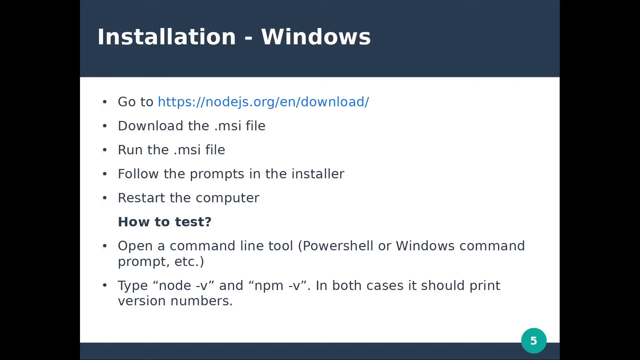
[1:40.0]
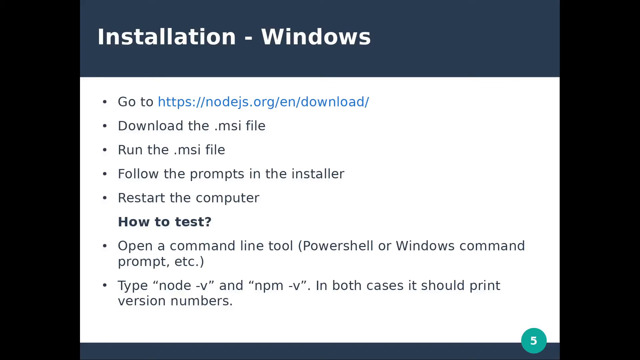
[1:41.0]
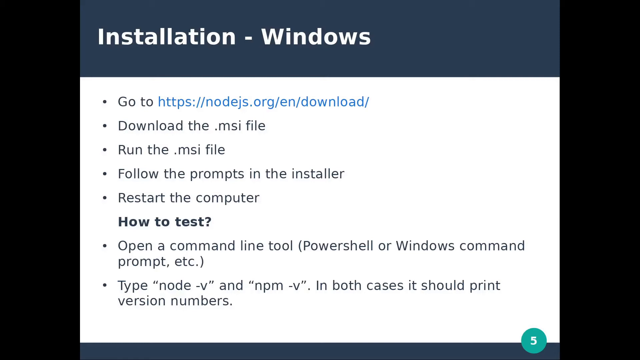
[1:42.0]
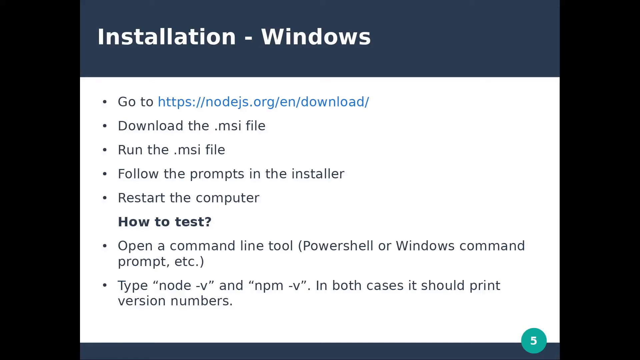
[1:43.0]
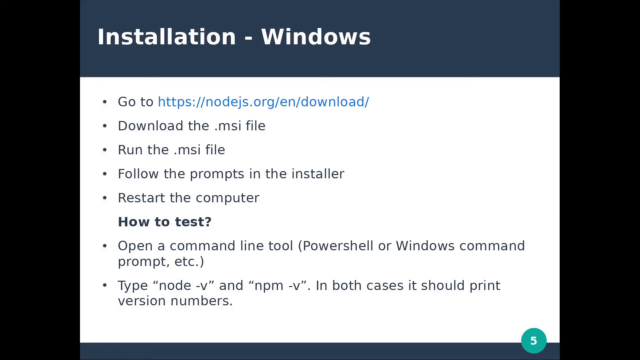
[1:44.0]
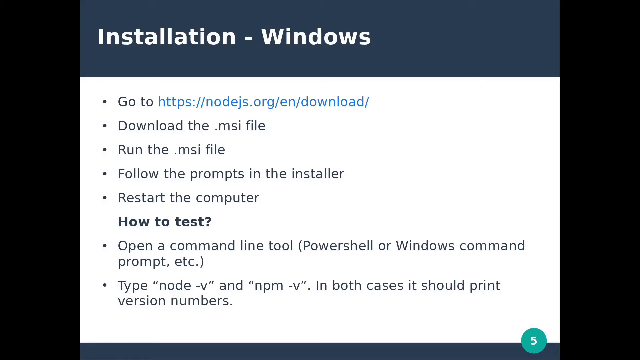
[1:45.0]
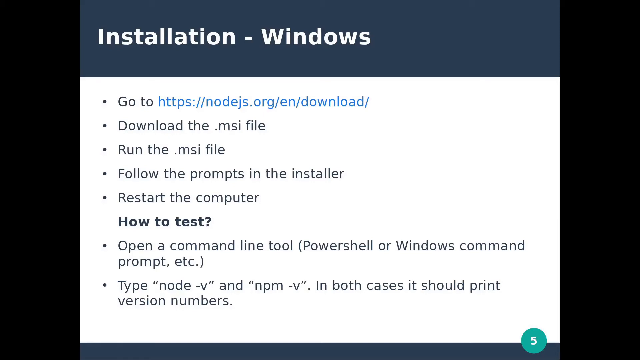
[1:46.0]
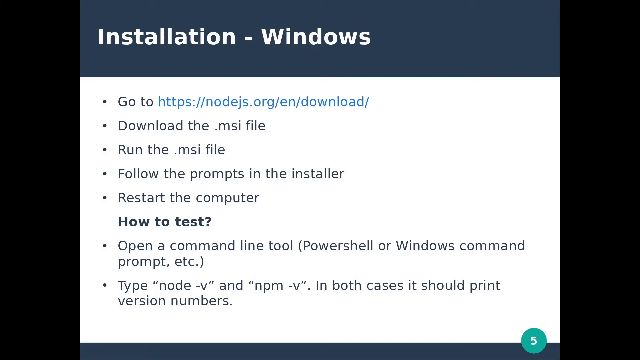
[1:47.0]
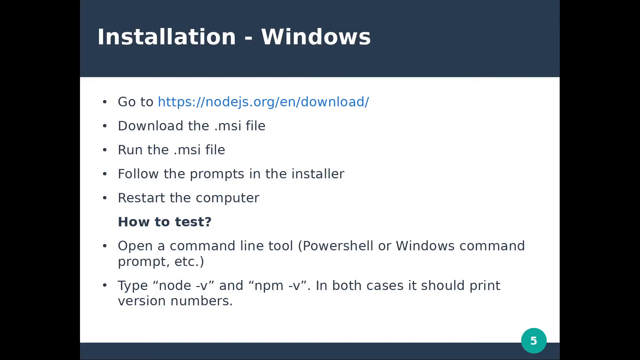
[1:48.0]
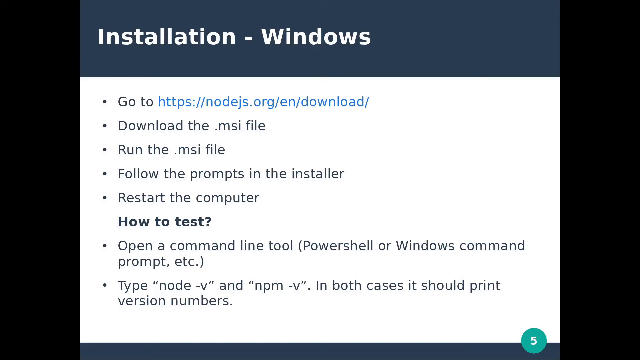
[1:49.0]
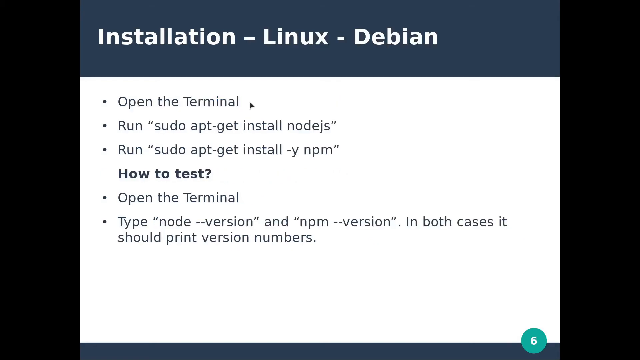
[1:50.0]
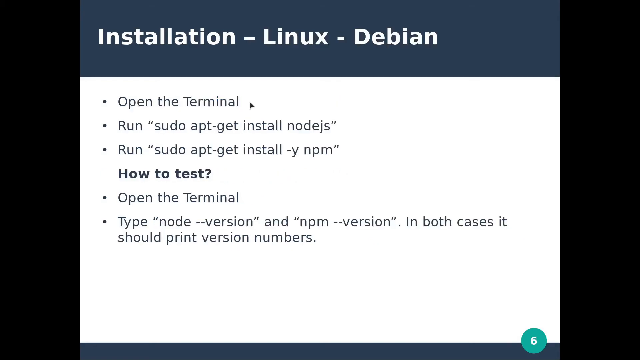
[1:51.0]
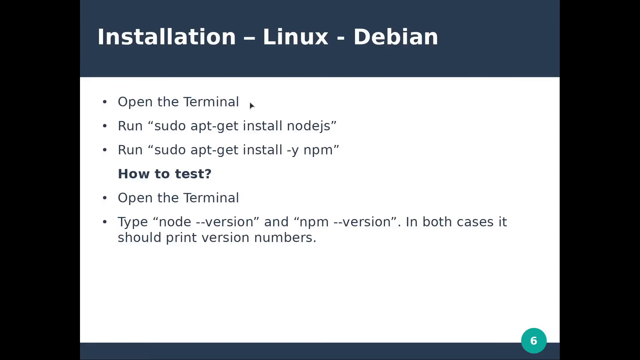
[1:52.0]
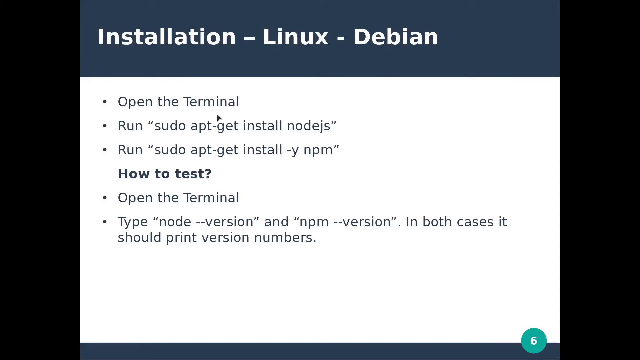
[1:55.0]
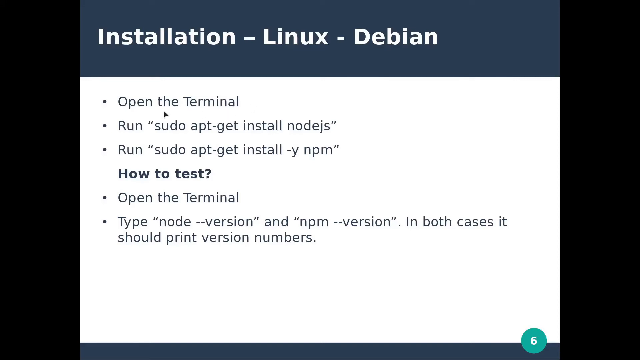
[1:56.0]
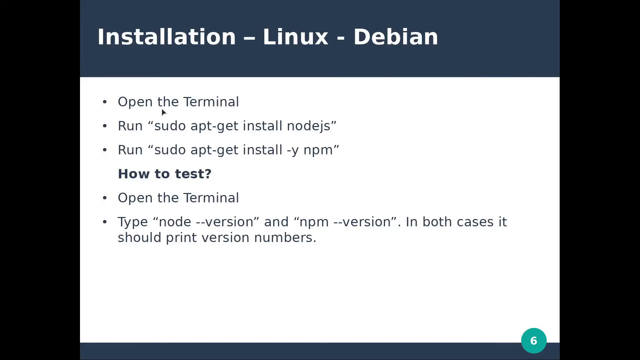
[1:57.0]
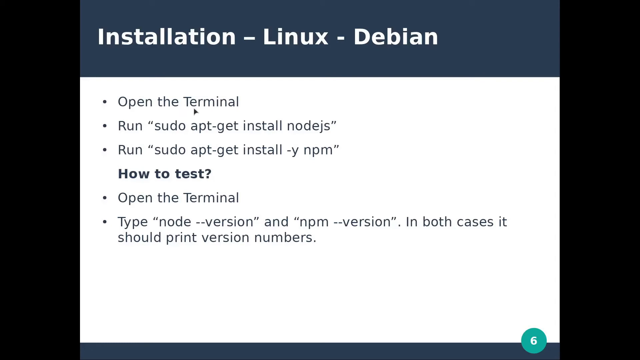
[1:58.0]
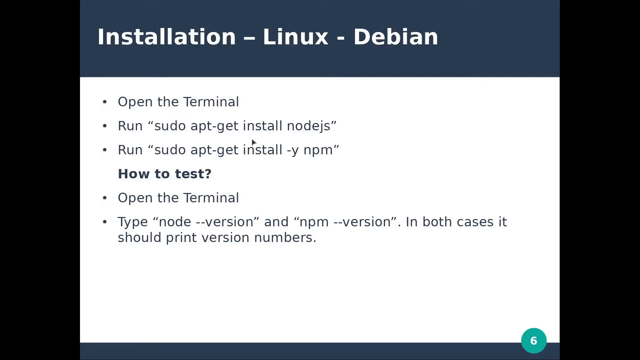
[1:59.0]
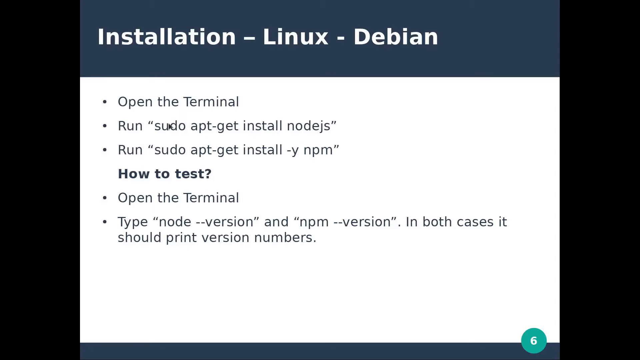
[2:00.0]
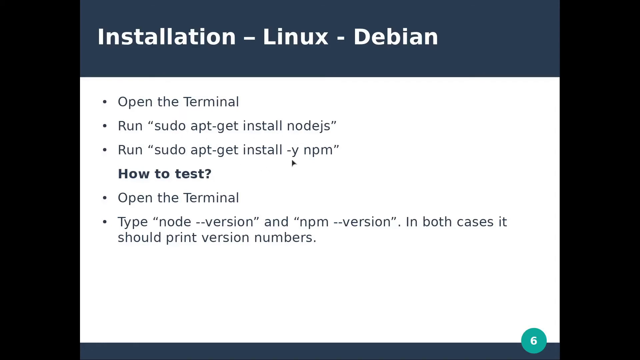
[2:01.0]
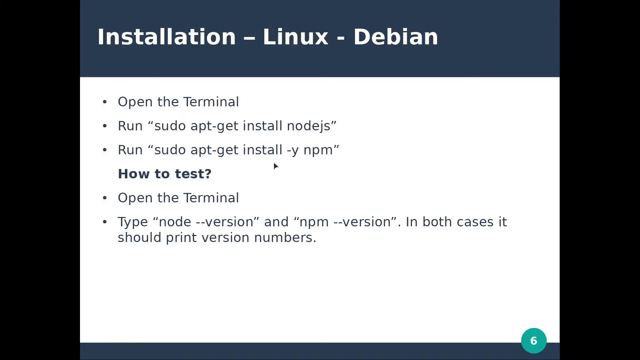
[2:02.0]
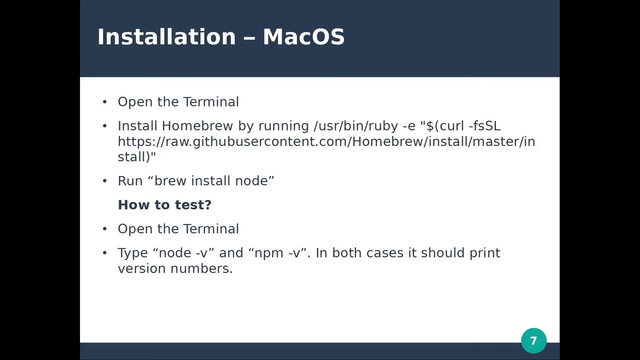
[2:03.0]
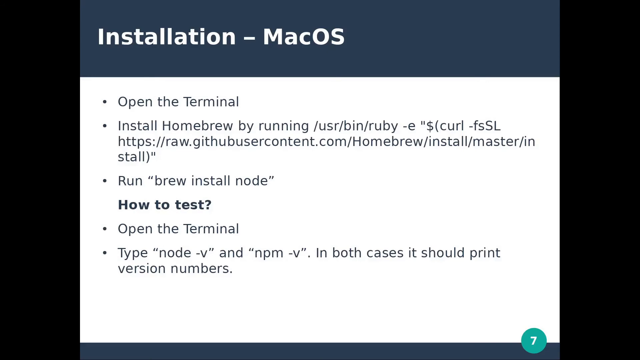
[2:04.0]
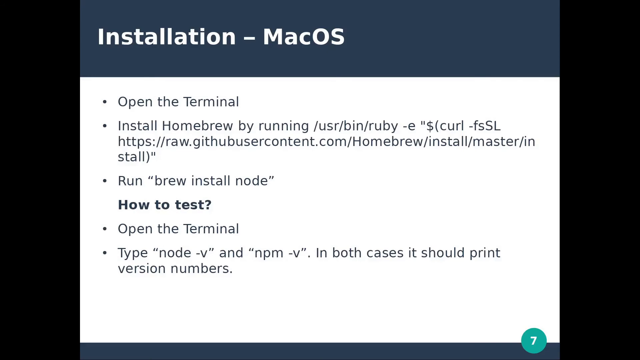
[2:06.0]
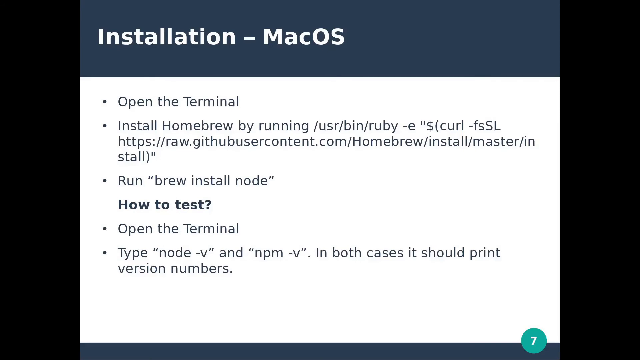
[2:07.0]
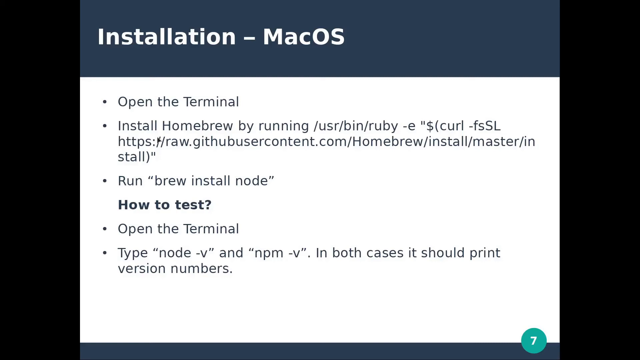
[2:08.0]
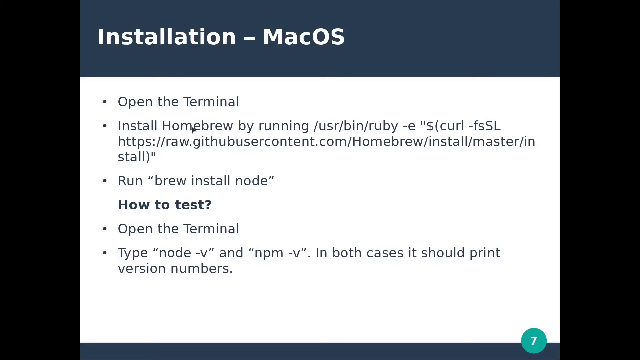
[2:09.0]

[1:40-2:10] The "installation windows" screen shows bullet points reading "go to https://nodejs.org/en/download/", "Download the MSI file", "run the .MSI file", "follow the prompts in the installer" and "restart the computer", with a heading beneath reading "how to test?" and "Open a command-line tool". The next screen has the heading "installation-linux-debian" with five bullet points beneath it, including "Open the Terminal", a bullet to run a "sudo apt-get install" command, and "Run - "sudo apt-get install -y npm"". A subheading reads "How to Test", followed by "Open the Terminal" and "Type node --version and npm --version. In both cases it should print version numbers".